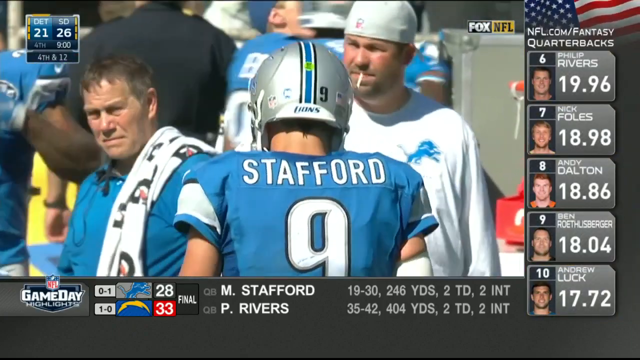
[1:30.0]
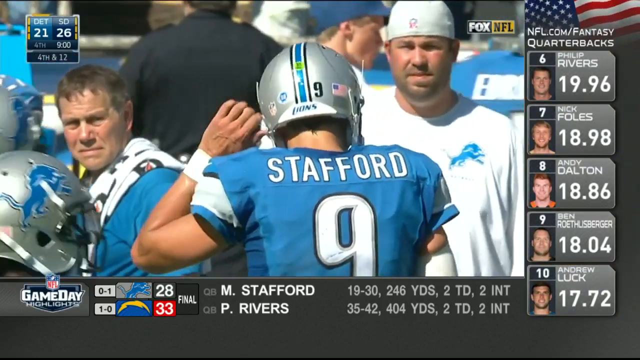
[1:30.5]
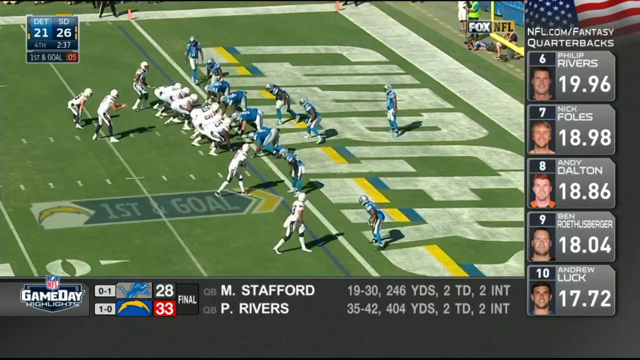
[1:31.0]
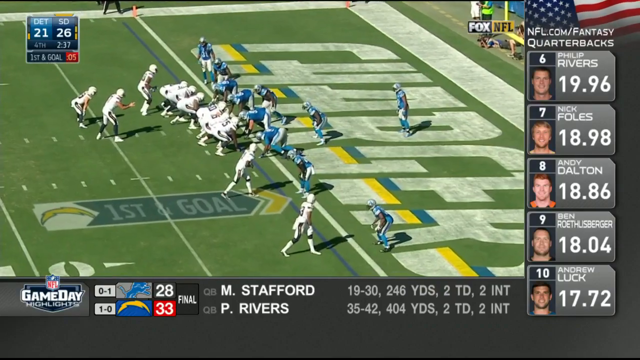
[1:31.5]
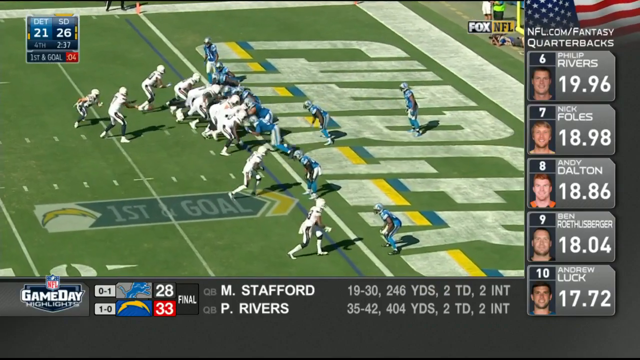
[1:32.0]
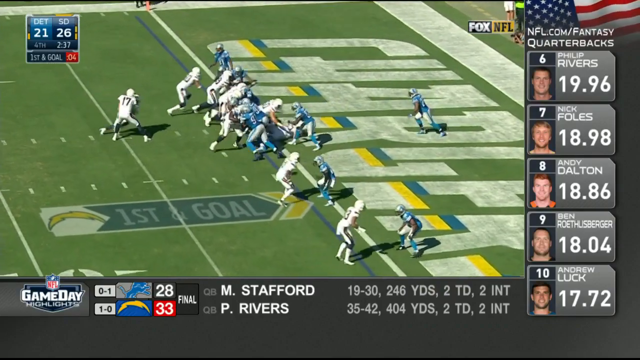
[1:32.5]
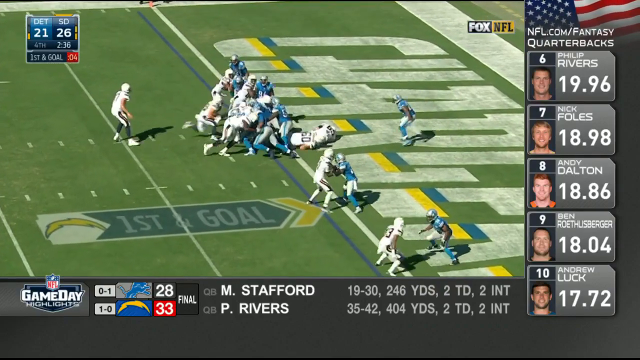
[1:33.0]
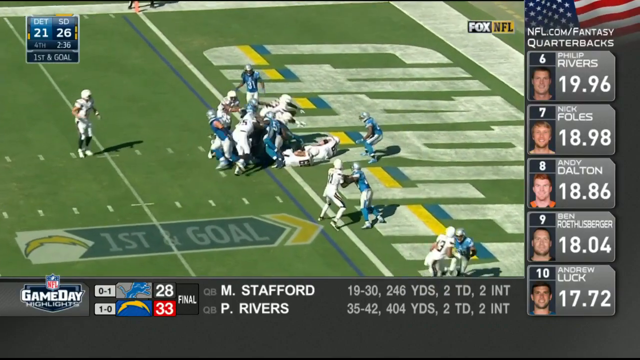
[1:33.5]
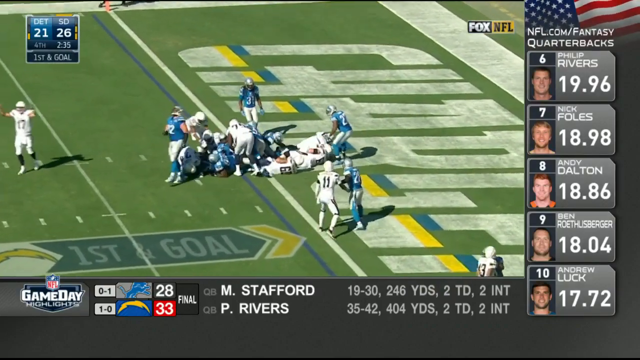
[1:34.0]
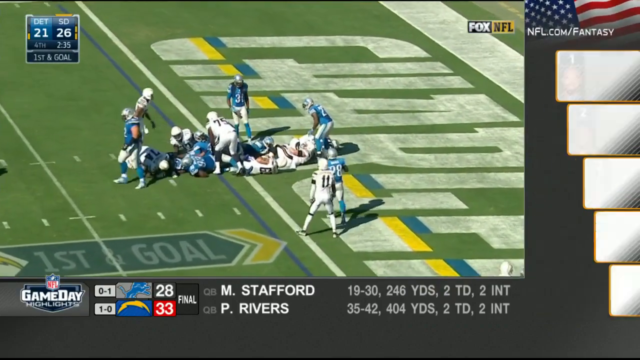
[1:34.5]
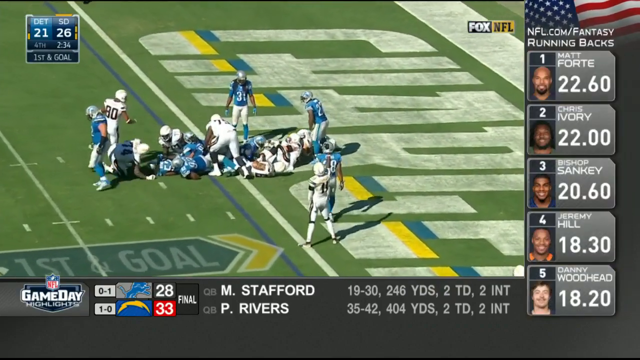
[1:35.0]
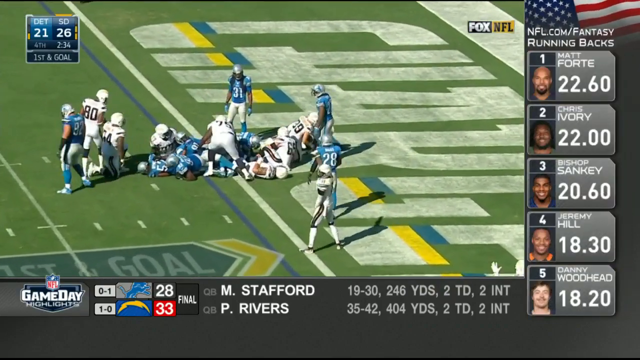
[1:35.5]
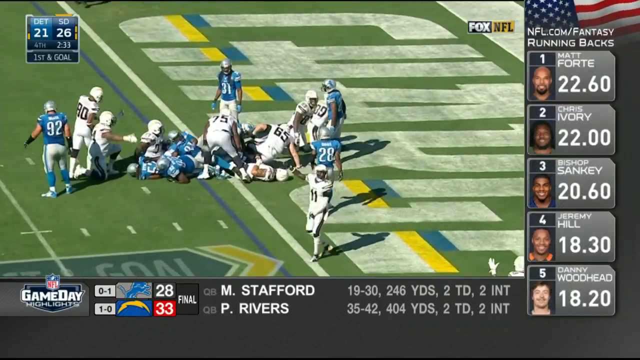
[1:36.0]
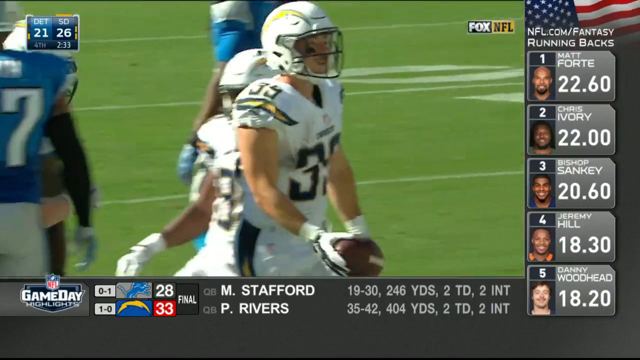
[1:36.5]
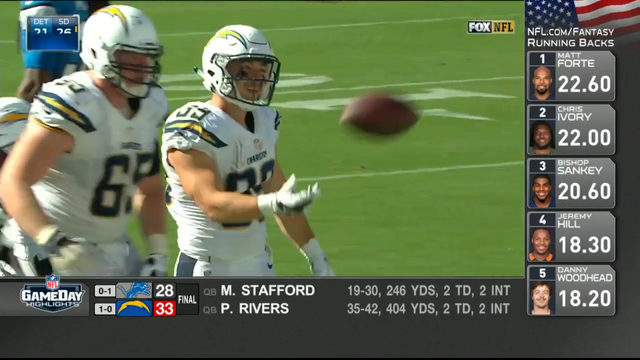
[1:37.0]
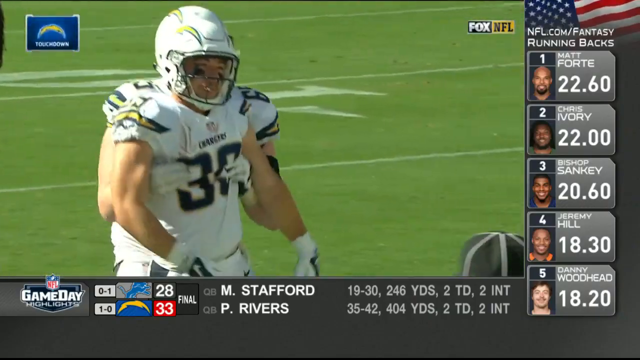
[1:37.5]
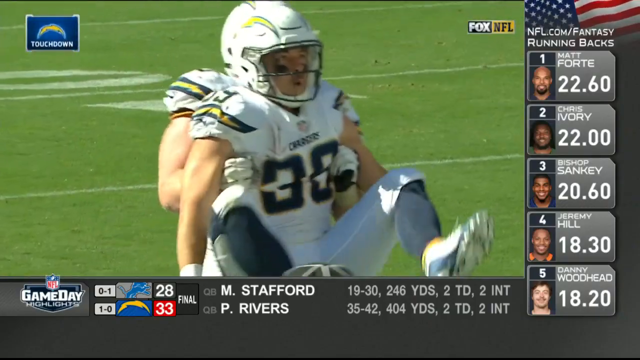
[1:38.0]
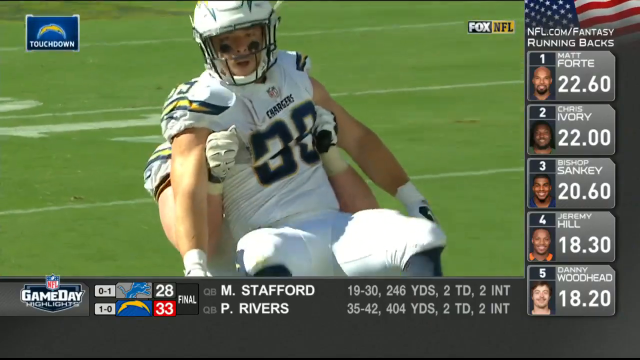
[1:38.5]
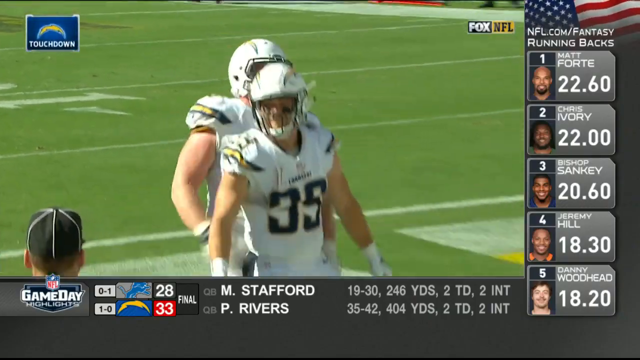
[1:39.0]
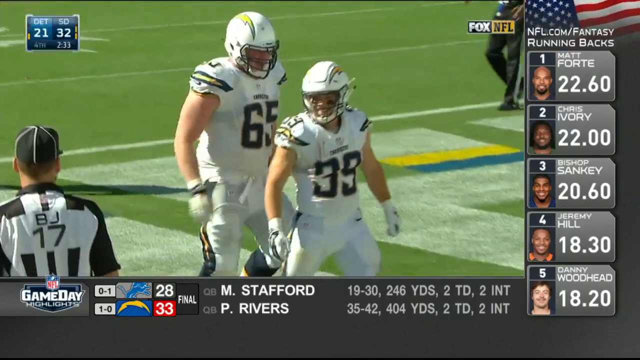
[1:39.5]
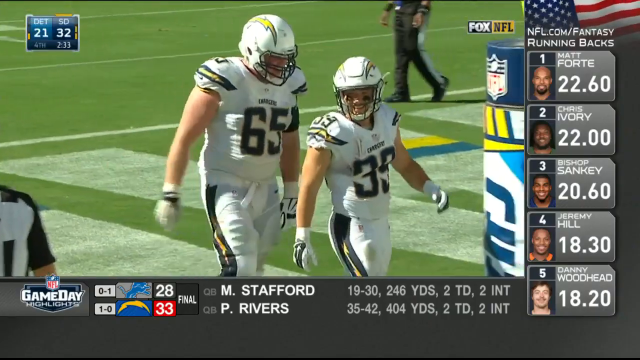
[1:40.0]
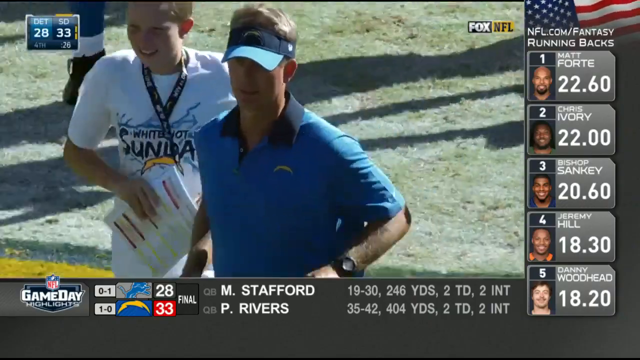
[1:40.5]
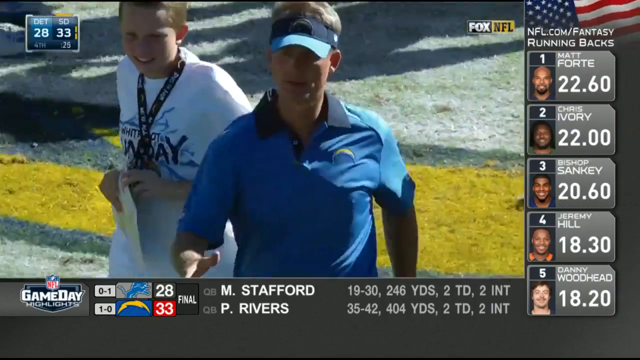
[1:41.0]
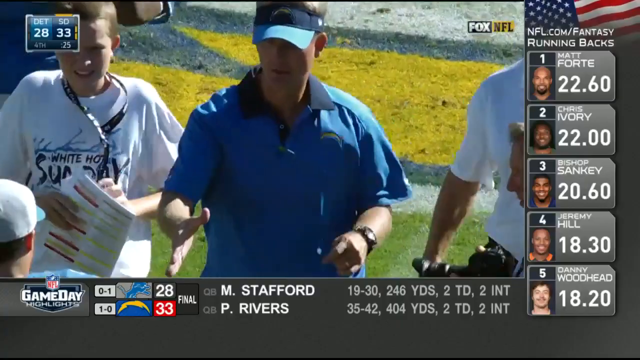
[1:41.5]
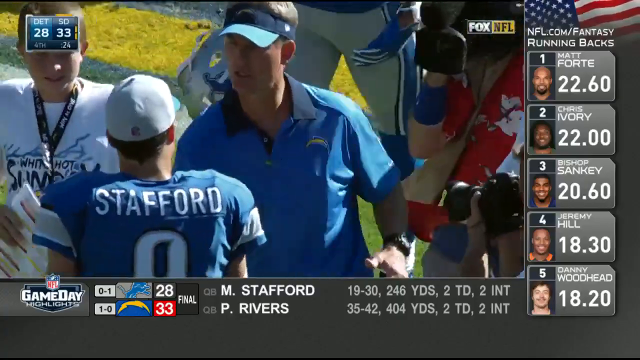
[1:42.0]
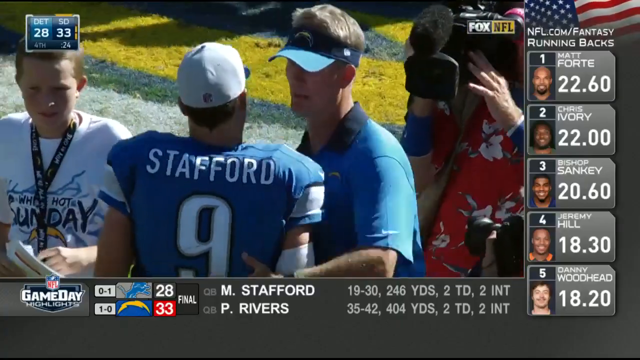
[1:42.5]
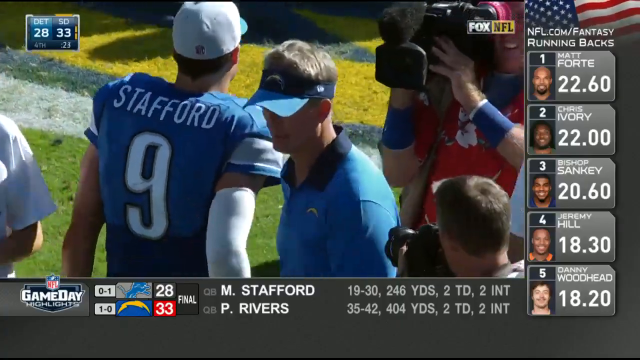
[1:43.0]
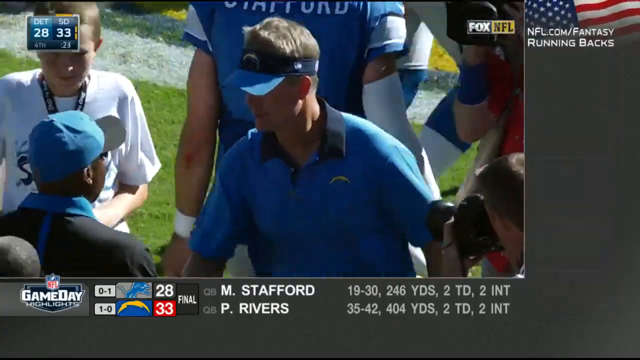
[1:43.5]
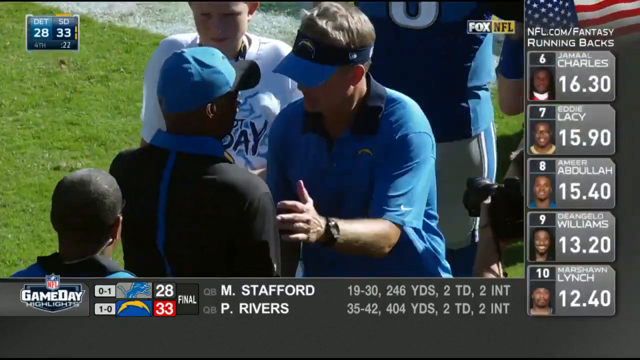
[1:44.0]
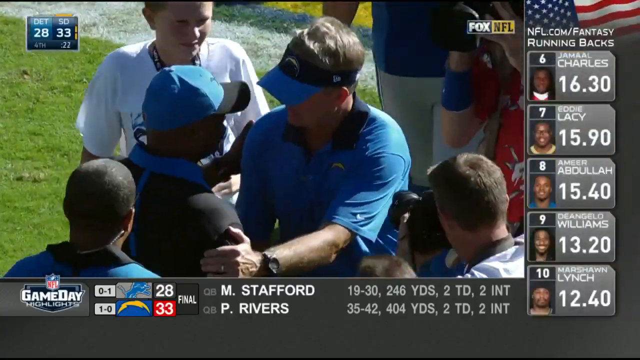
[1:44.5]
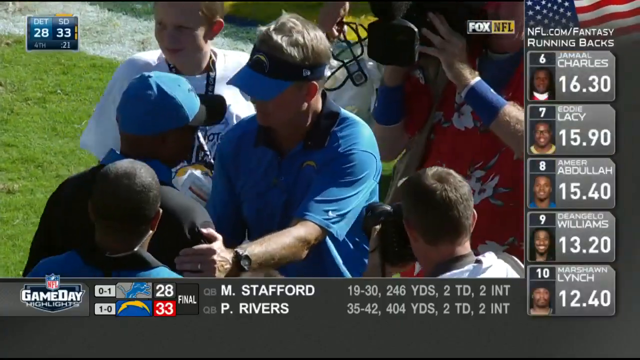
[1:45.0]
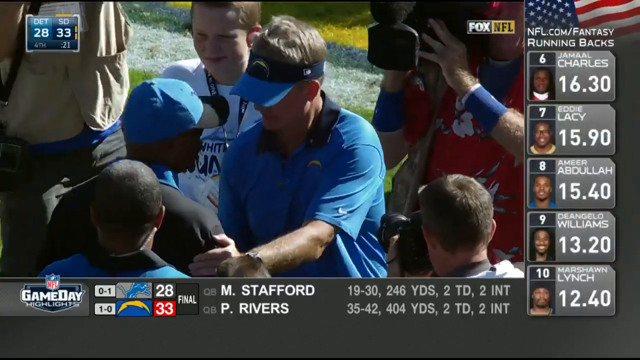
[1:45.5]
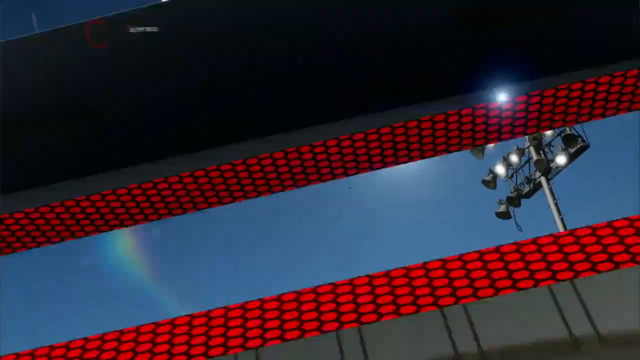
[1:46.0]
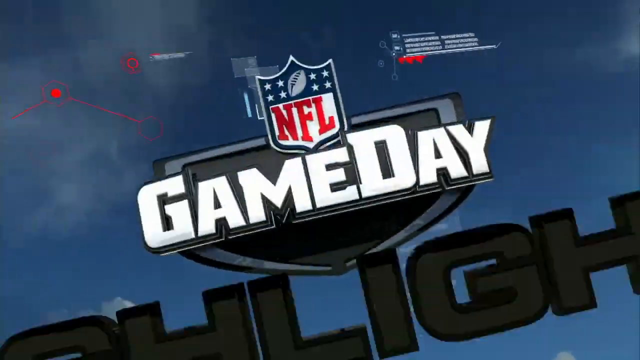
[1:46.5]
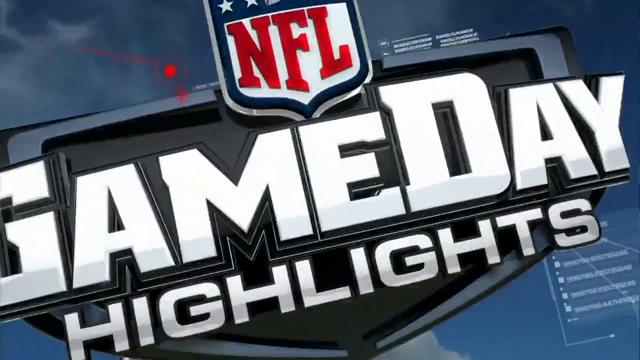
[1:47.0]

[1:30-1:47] After the missed pass, a close-up from behind shows the quarterback, number nine, with "Stafford" in white across his back, walking toward the sideline. In another play the blue team is backed up in its end zone, with the line of scrimmage appearing to be at about the one-yard line, and the white team on the left. The quarterback gets the snap and immediately hands it off to a teammate, who runs toward the end zone into a pile of people right at the line of scrimmage. He apparently gets across the line for a touchdown, and the players celebrate. He sort of throws the ball off in front of him, and a teammate comes from behind, lifts him off the ground so his legs come up to his chest, and puts him down. A coach in a blue golf shirt and blue visor sort of pats his quarterback on the back as the quarterback walks off over the sideline; it possibly is the end of the game. The coach is then apparently approached by the other team's coach or another staff member, who wears a blue and black baseball hat, and they face each other and shake hands. A final graphic shows "game day highlights" in white all-caps letters at an angle, with the NFL logo above it, against a dark sky background with arena lights.